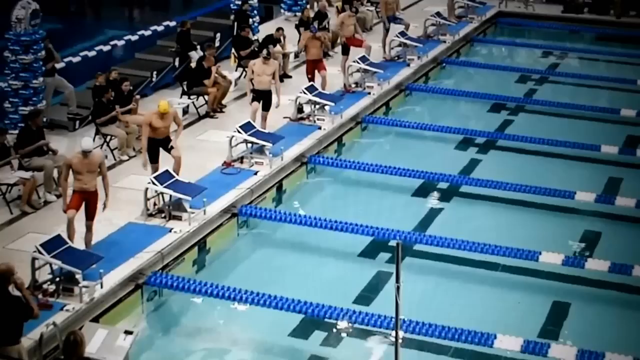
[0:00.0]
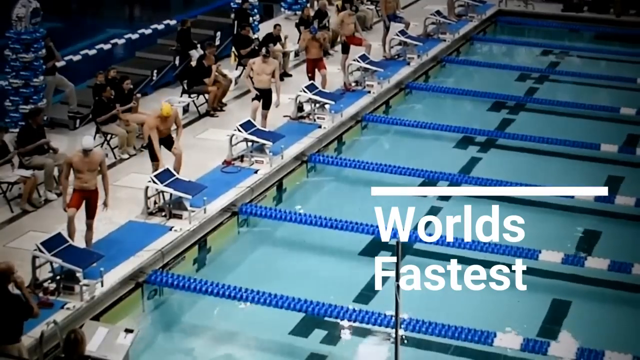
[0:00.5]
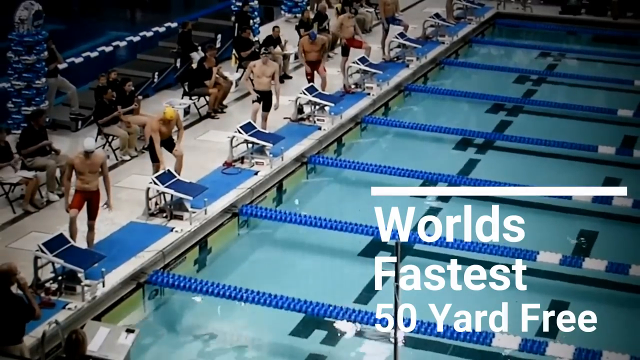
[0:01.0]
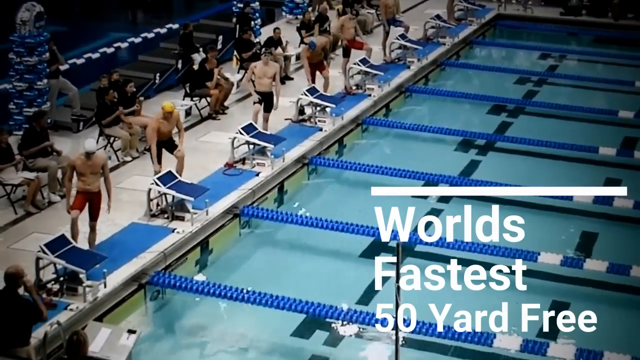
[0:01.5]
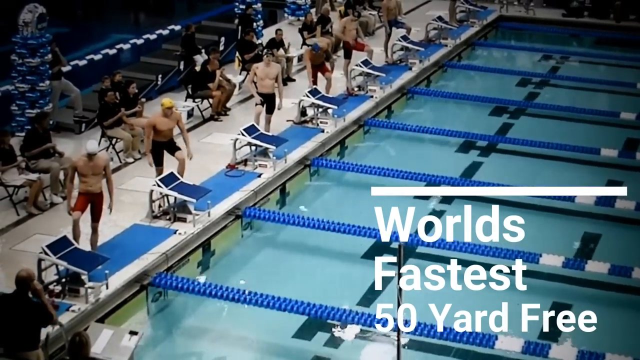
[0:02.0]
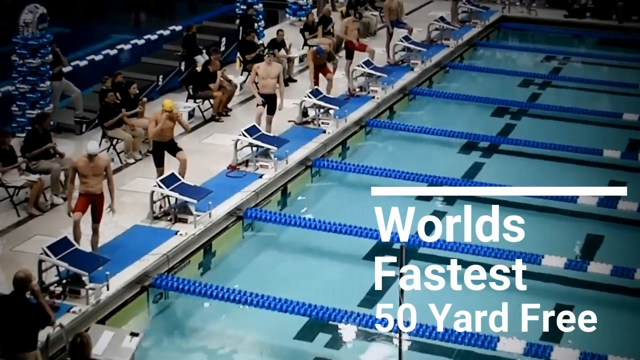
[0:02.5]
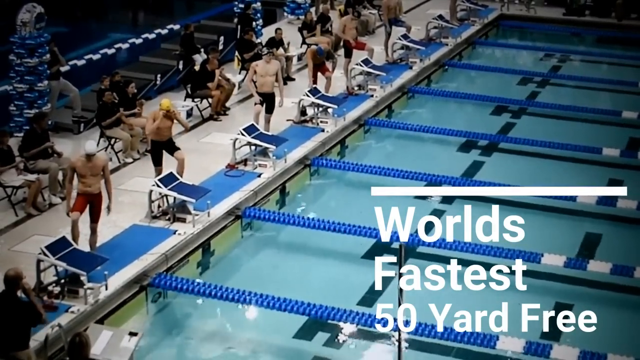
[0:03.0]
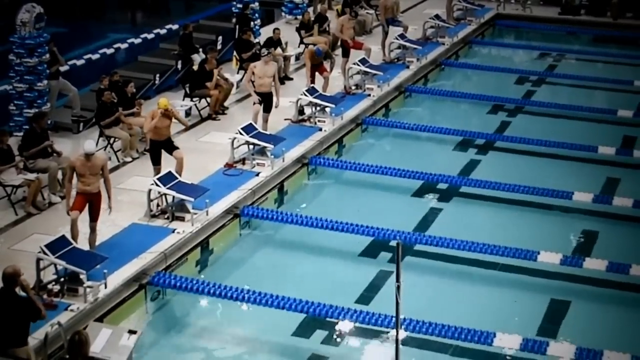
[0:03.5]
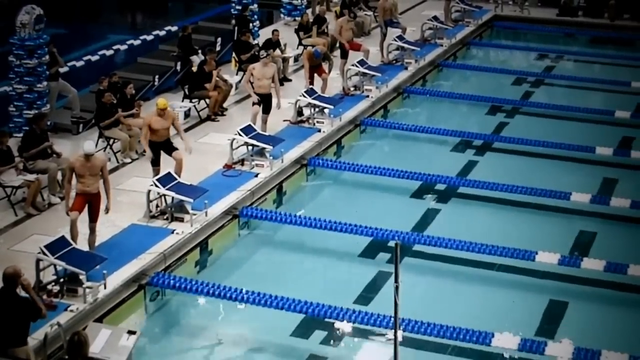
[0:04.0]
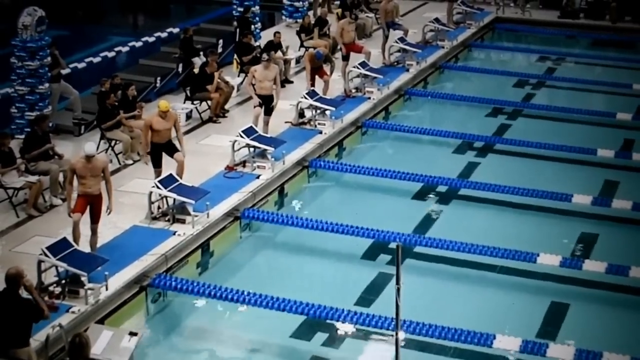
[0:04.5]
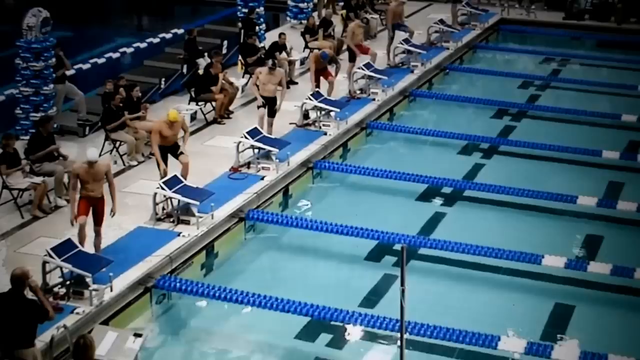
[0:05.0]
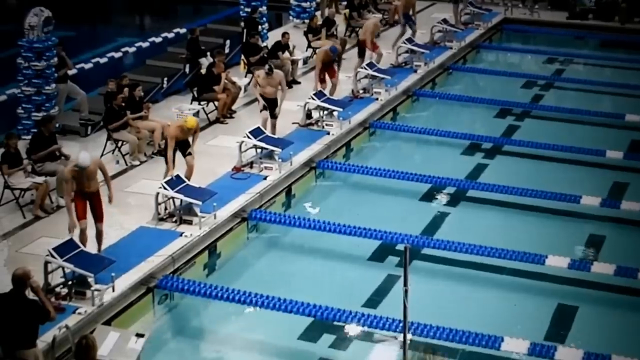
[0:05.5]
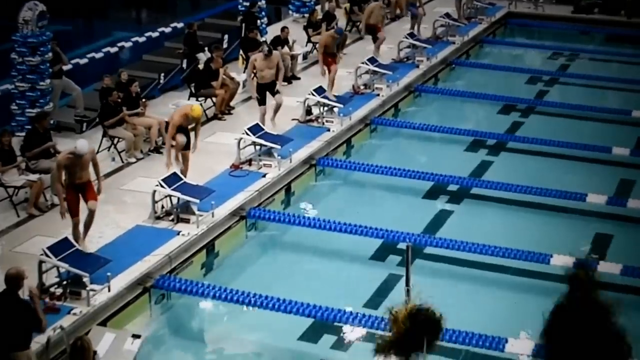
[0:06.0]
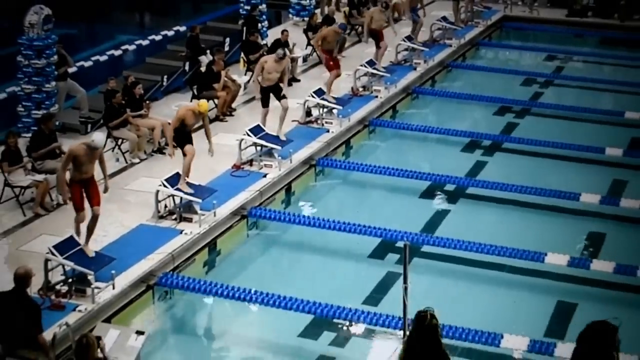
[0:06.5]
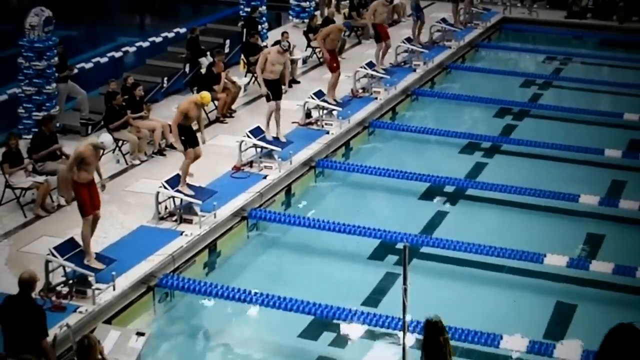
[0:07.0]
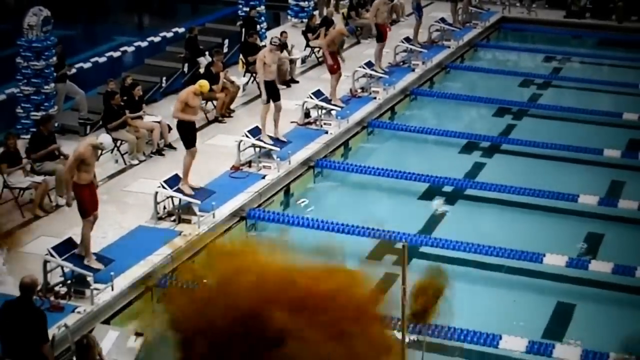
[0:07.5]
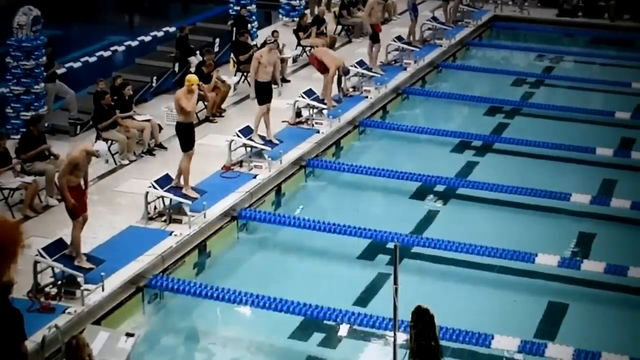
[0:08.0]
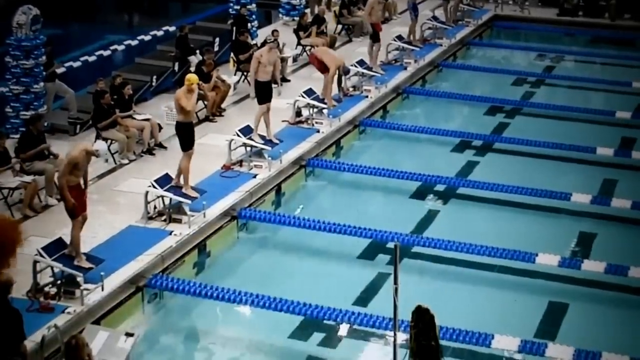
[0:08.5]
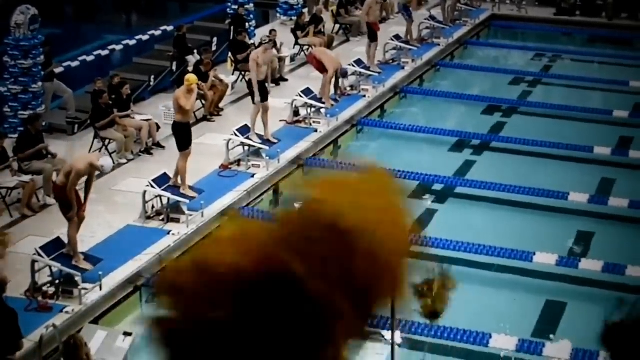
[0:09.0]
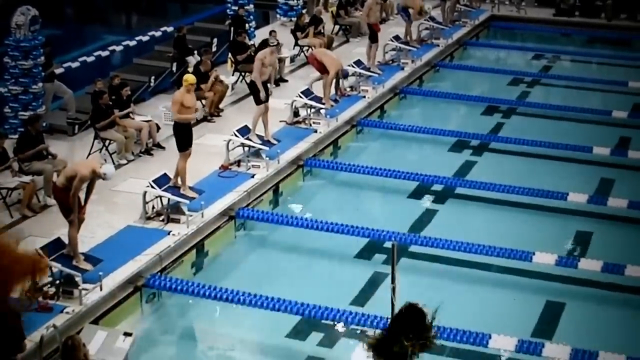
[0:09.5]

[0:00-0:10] At a swim meet, text reads "world's fastest 50-yard free." The players are standing close to the diving boards, not yet on them, and then step up to stand on the diving boards, getting ready to dive into the water for the 50-yard free. All of them are men wearing swim caps and swim trunks. The water is blue, with lines so each can stay in his lane. When they jump, people are visible behind them, most apparently judges, wearing black polo shirts, khaki pants and white tennis shoes. No other people in a crowd or audience are really visible.